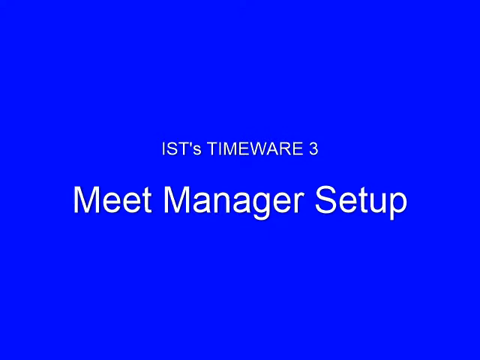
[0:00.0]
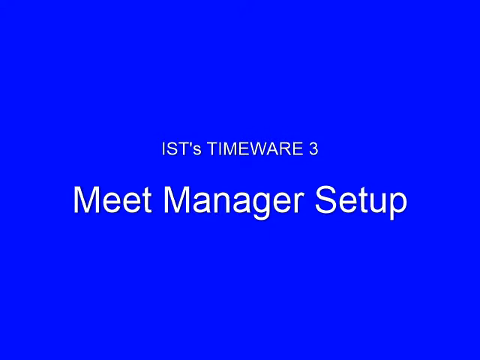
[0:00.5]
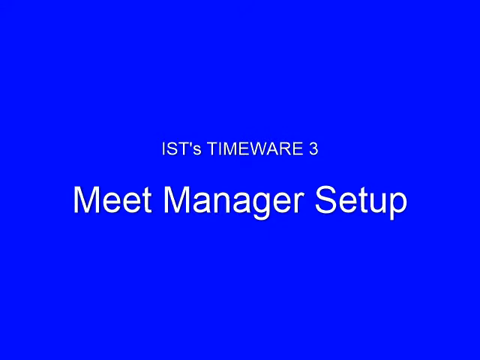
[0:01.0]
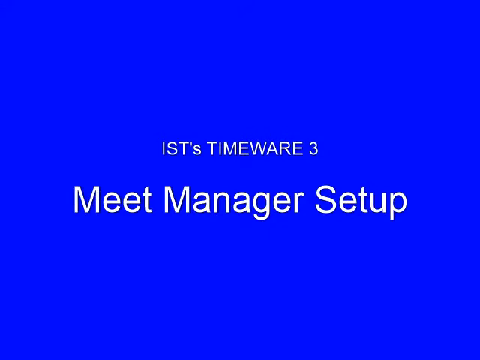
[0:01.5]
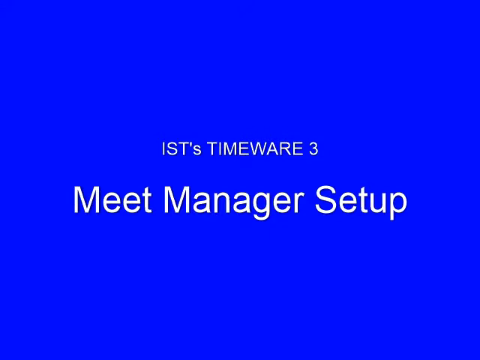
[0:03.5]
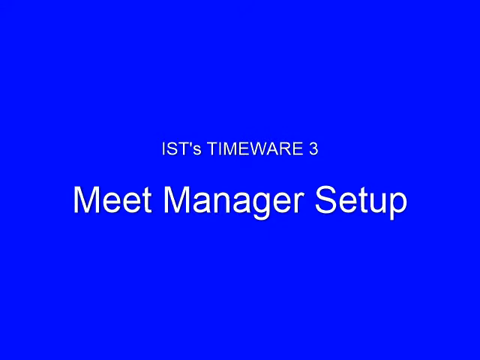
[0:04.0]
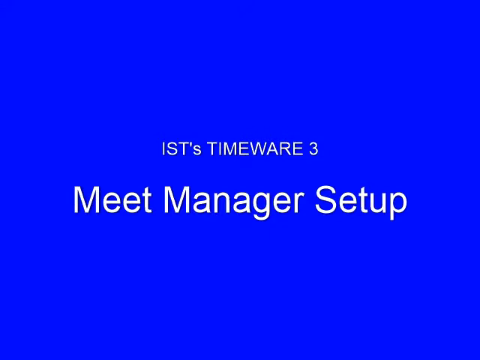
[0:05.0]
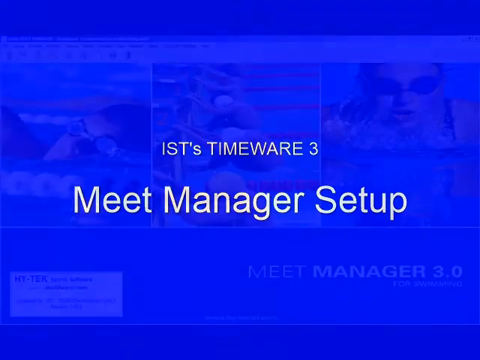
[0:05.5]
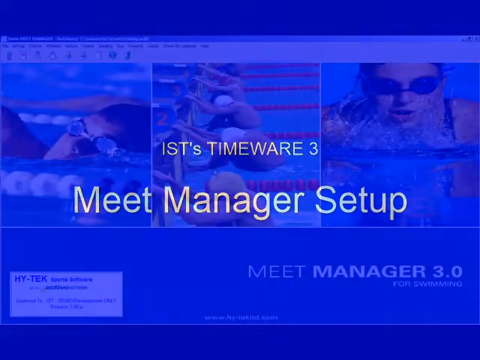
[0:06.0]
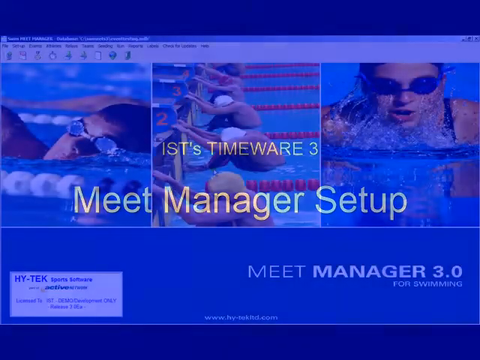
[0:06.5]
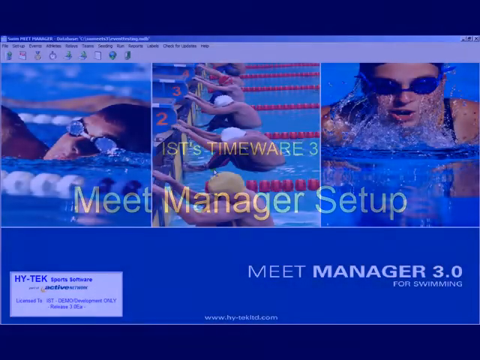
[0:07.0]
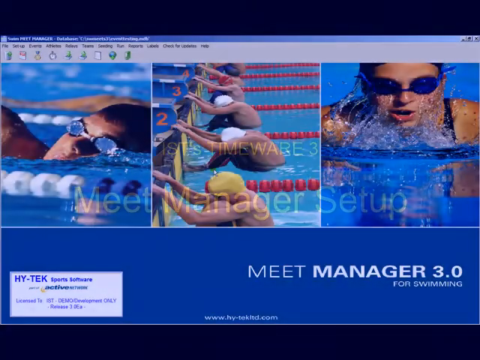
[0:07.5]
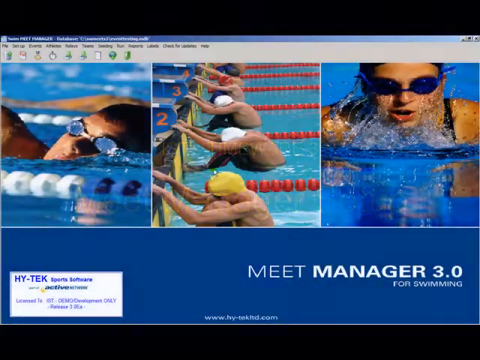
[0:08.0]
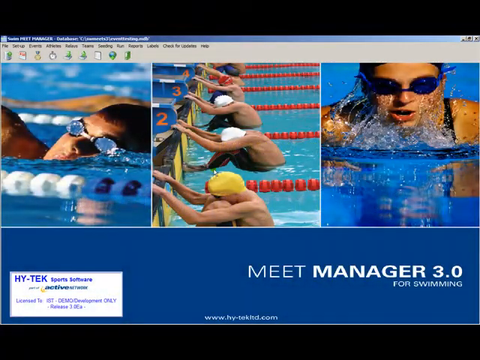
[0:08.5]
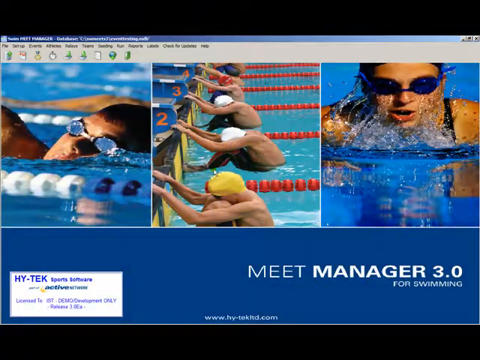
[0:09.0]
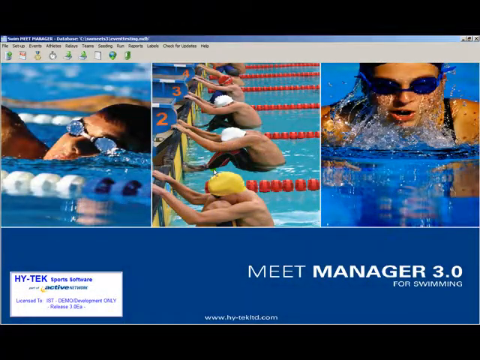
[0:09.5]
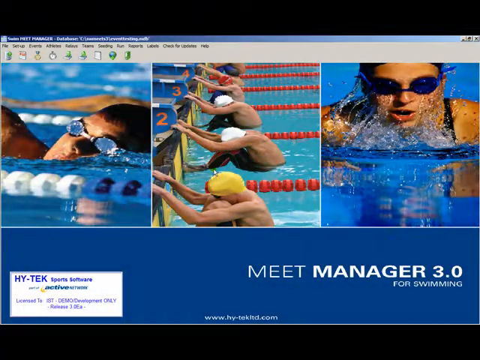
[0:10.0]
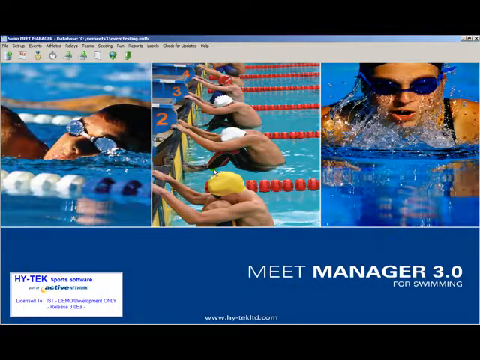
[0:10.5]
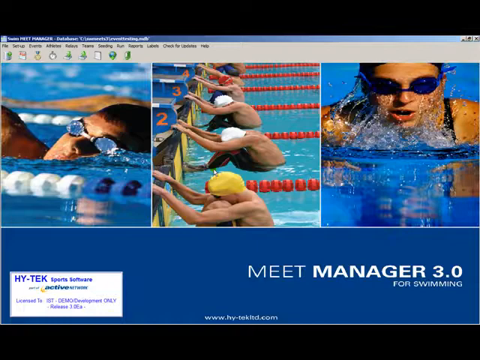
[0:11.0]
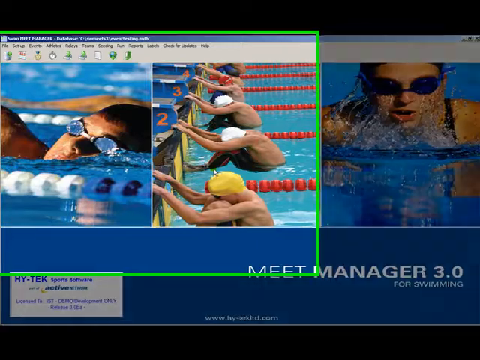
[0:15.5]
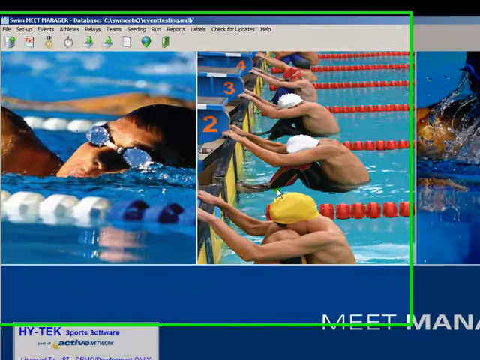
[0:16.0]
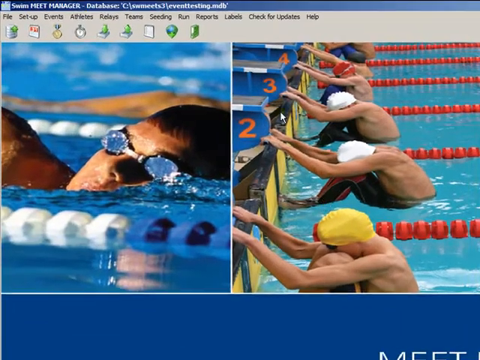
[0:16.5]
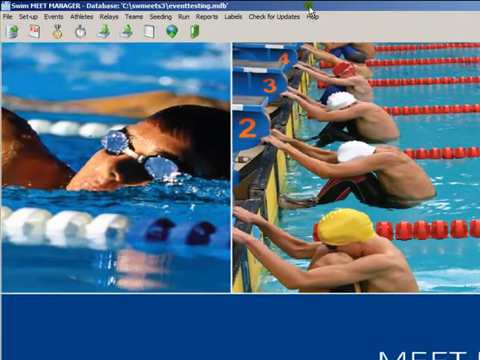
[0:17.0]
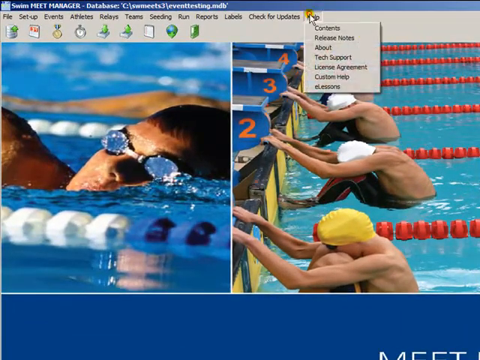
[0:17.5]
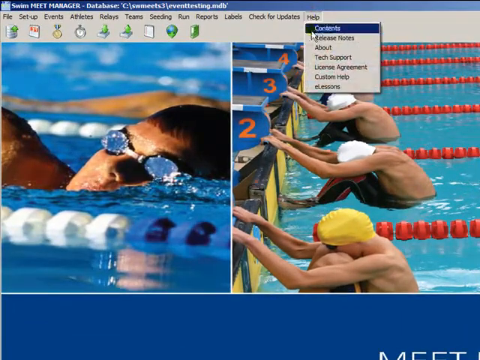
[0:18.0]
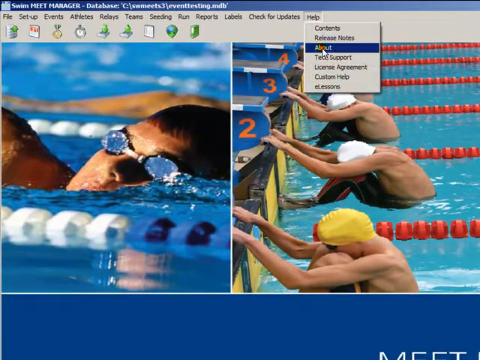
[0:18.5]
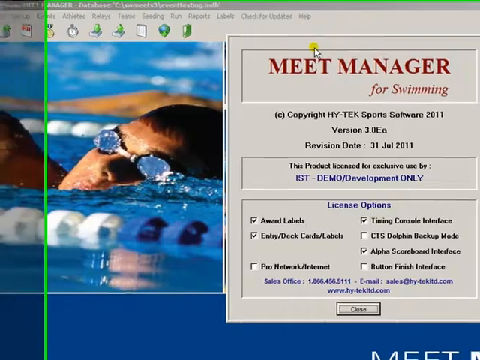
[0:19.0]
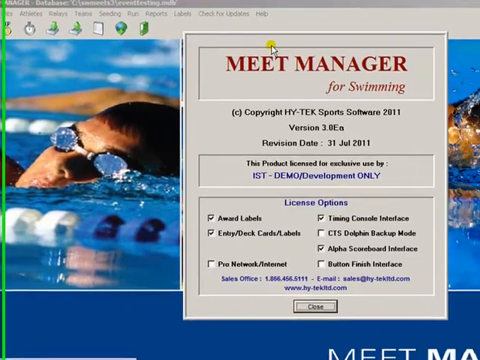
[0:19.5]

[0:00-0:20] The entry screen of a swim meet management software appears: a blue background with white type reading "Meet Manager Setup. IST's TimeWare 3". The video then moves to the software's home screen, which has several menu options and, as its background, images of people taking part in a swim meet. A person selects the Help menu and then the About menu, after which the software's About menu is visible with several options and items of information. The video appears to be a demonstration of the software. There are three images of swimmers in the background: on the left, a swimmer swimming freestyle; in the middle, six swimmers in their lanes ready to begin the backstroke; and on the right, a swimmer who appears to be performing the breaststroke.